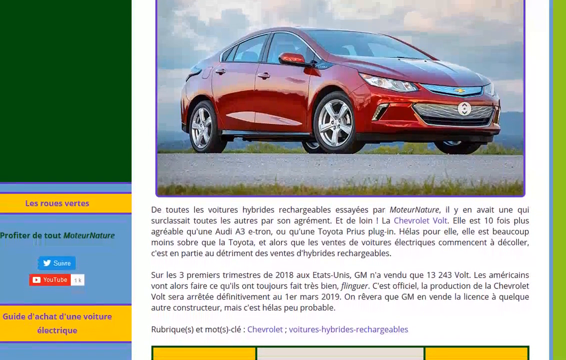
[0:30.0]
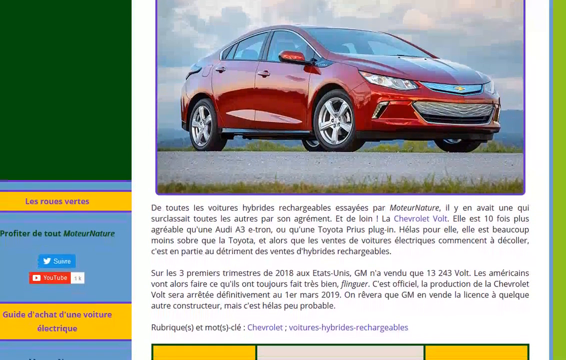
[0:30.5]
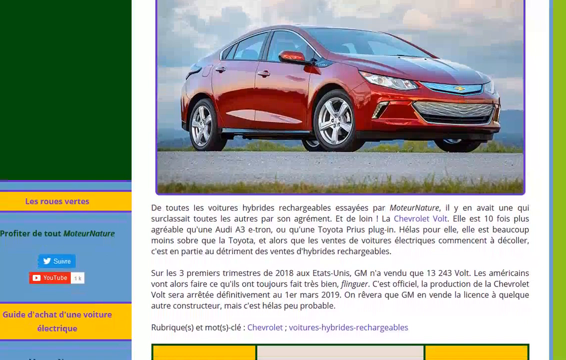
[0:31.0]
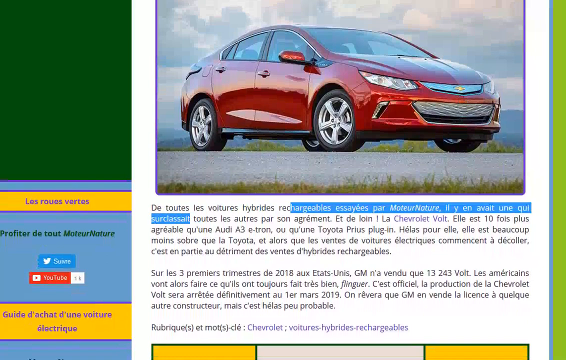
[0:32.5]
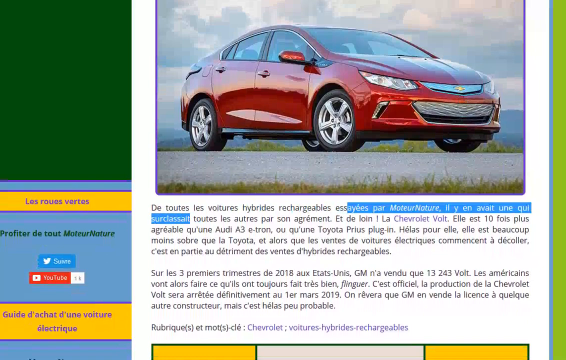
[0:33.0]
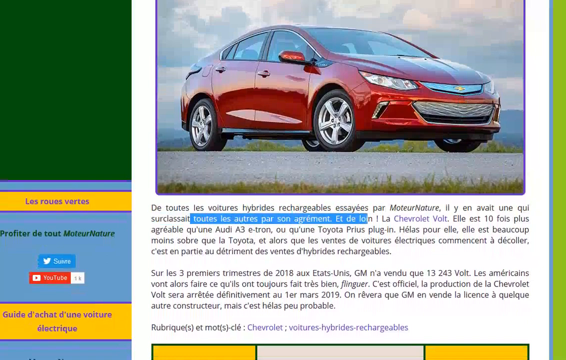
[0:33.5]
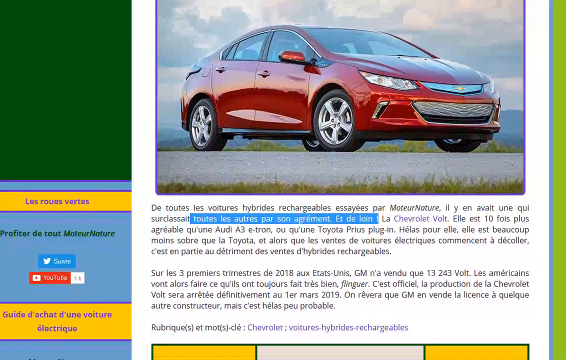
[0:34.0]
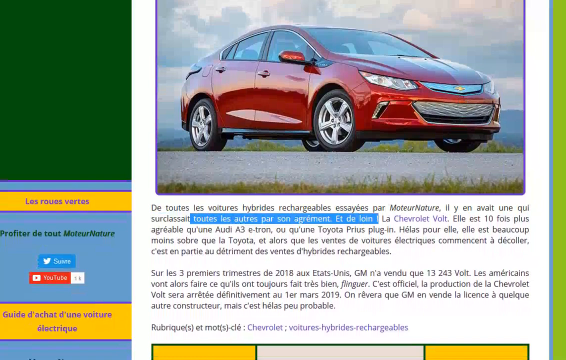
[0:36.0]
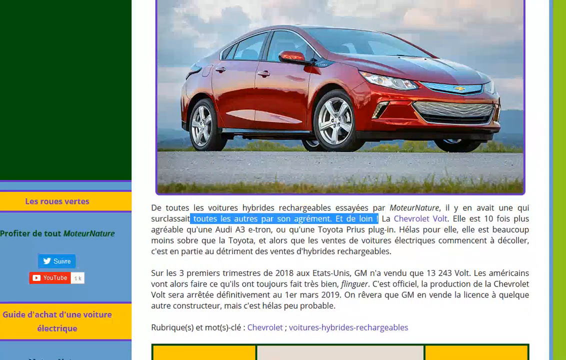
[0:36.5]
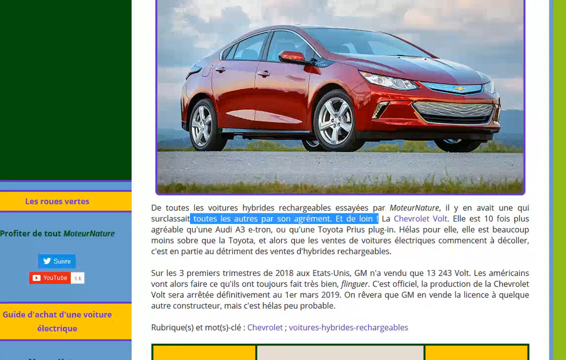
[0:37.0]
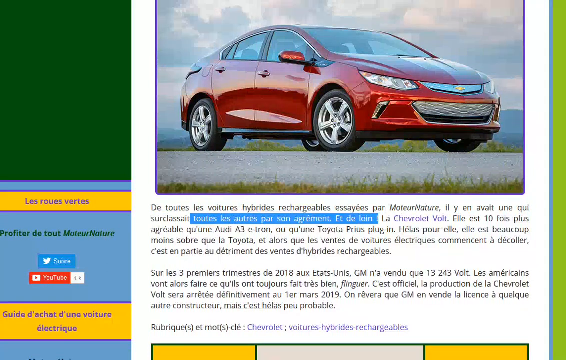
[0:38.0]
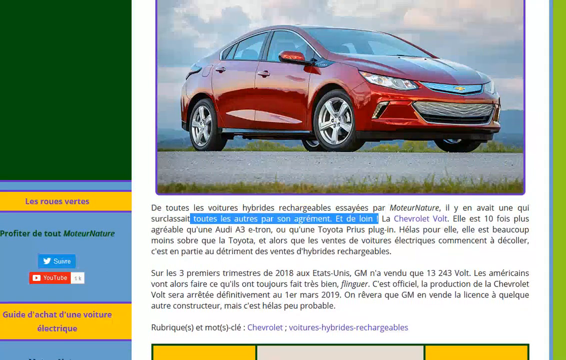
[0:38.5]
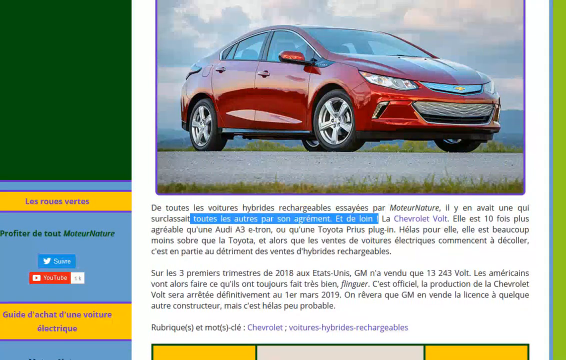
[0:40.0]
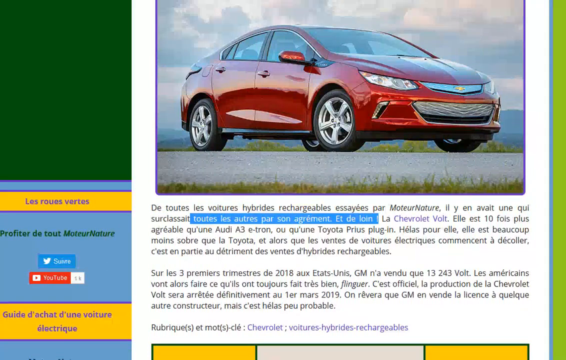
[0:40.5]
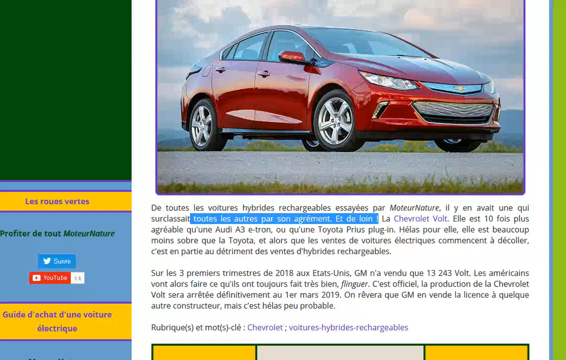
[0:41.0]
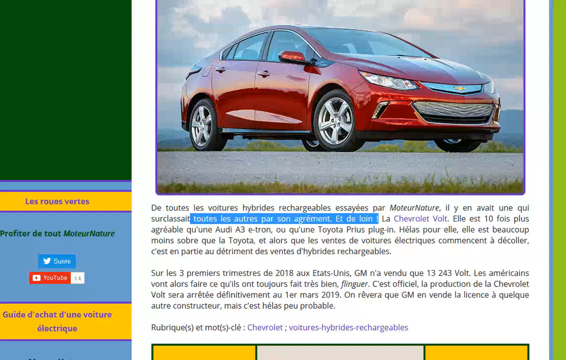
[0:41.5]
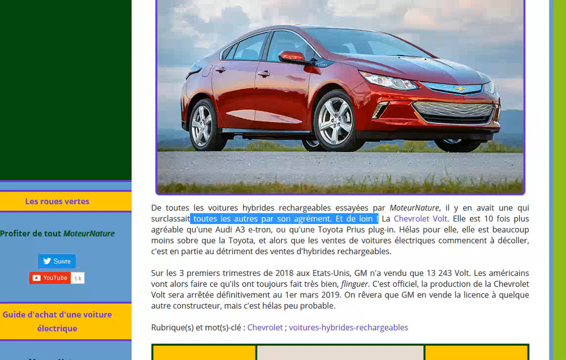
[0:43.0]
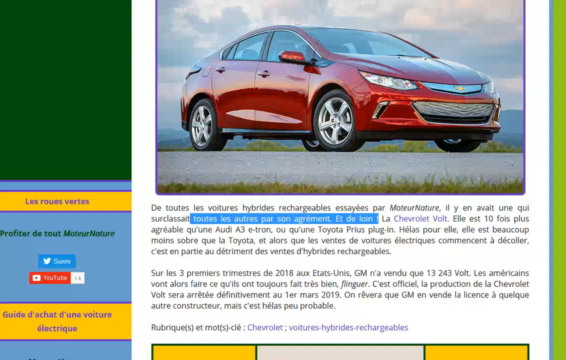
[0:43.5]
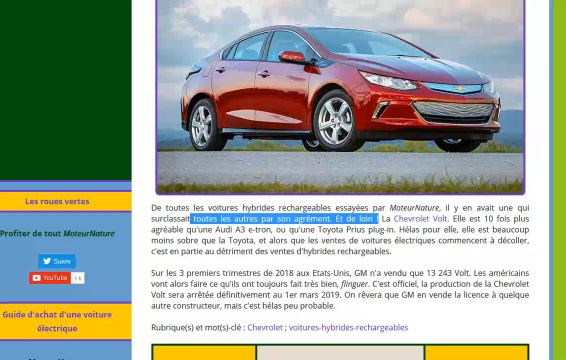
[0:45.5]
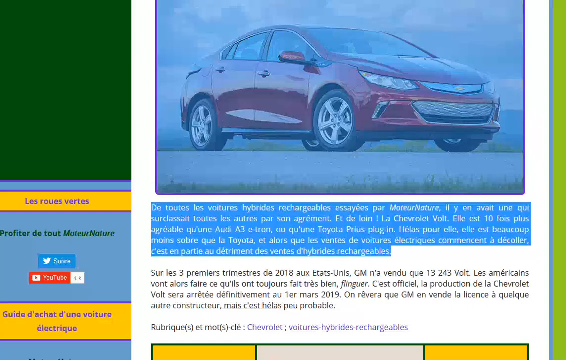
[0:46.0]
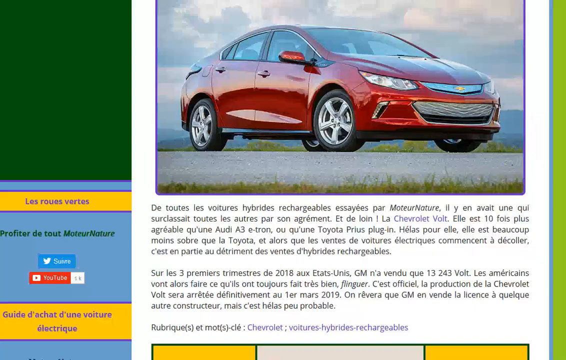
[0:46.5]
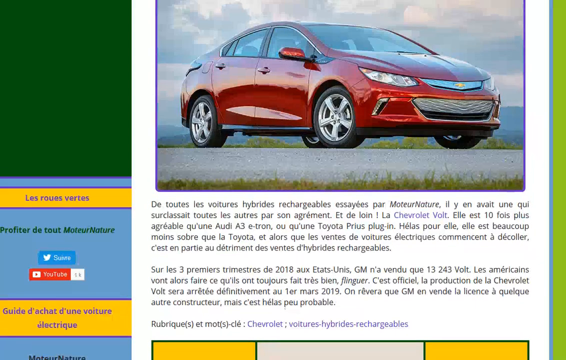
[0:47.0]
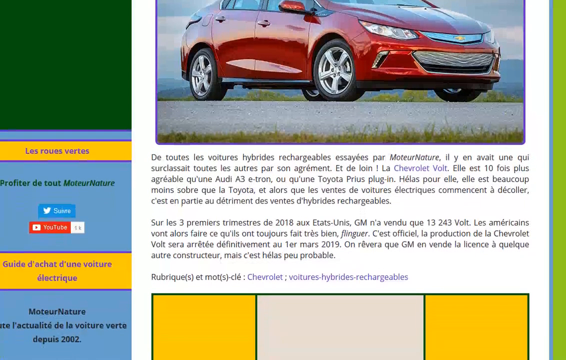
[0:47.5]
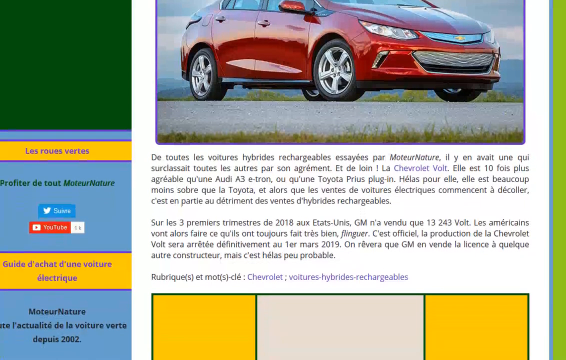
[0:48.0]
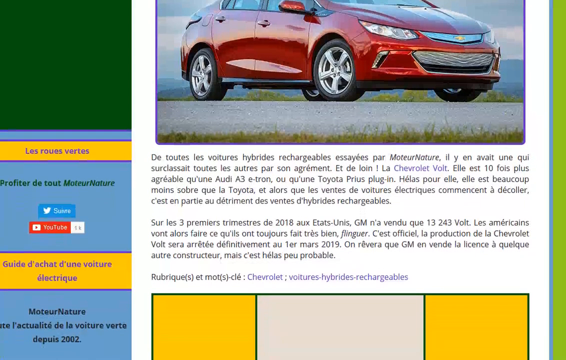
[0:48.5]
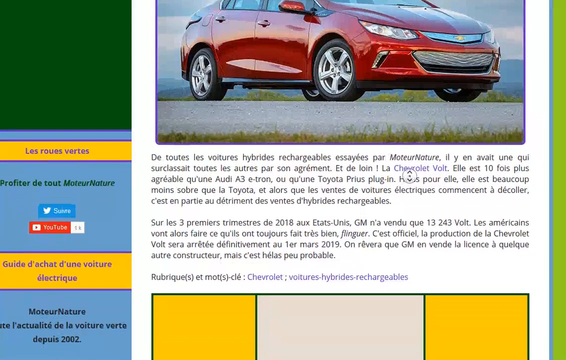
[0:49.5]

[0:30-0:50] Someone begins highlighting parts of the car's description in blue, and a few words of the text turn blue. The person appears to highlight the picture of the car and a large paragraph of the description, then quickly unhighlights it. The car, a dark red Chevrolet Volt, is a very shiny, brand-new four-door car with untinted windows. The gasoline door is visible on the rear of the car's right side. No one is in the car, which is parked in a secluded area, with mountains off in the distance and large white clouds in the sky. The left side of the page has a big, dark green background that looks like a square, while on the right side only a small strip of lime green background is visible.